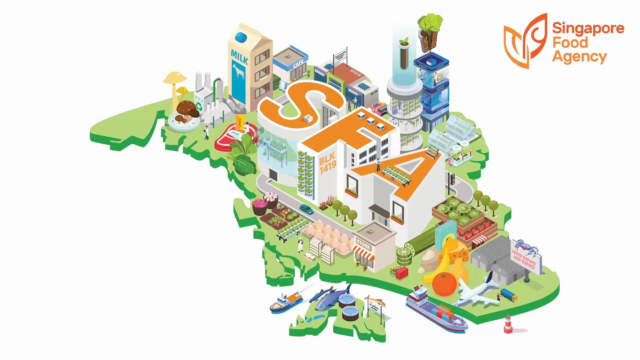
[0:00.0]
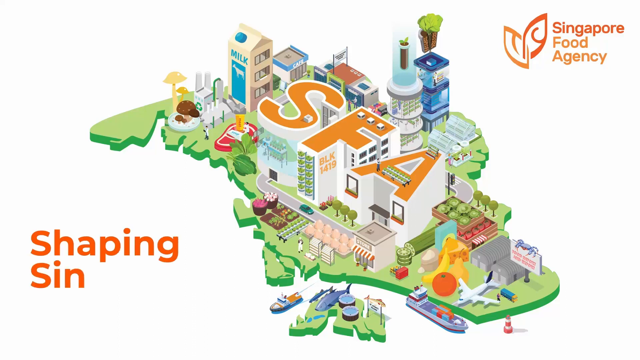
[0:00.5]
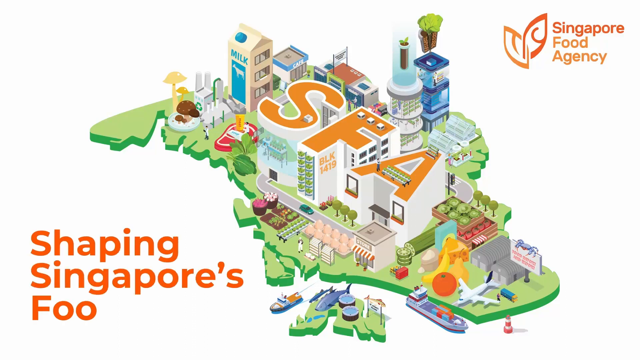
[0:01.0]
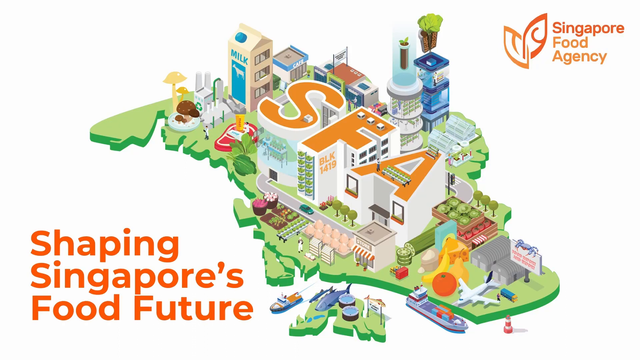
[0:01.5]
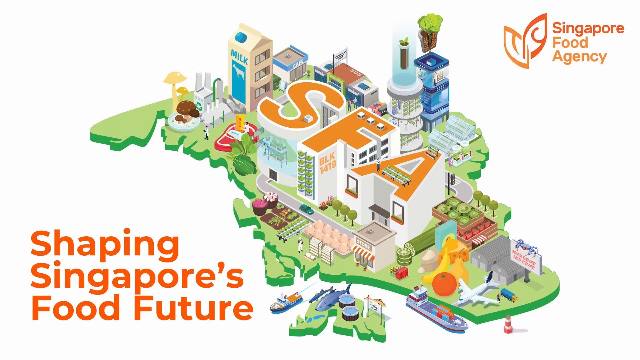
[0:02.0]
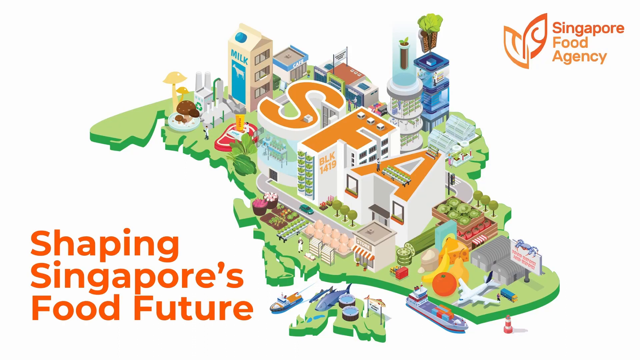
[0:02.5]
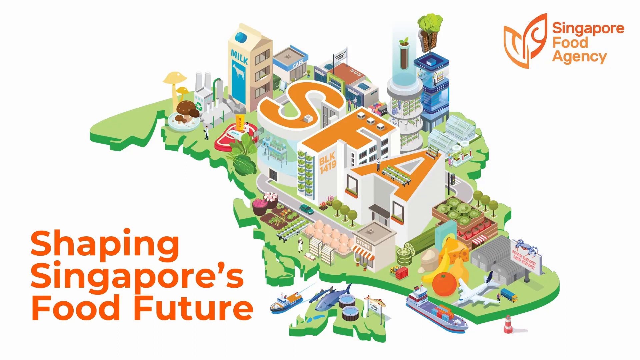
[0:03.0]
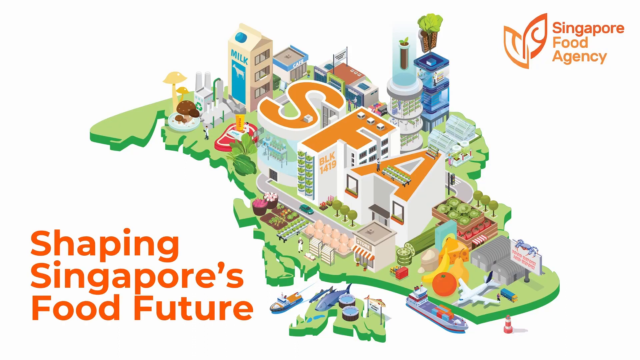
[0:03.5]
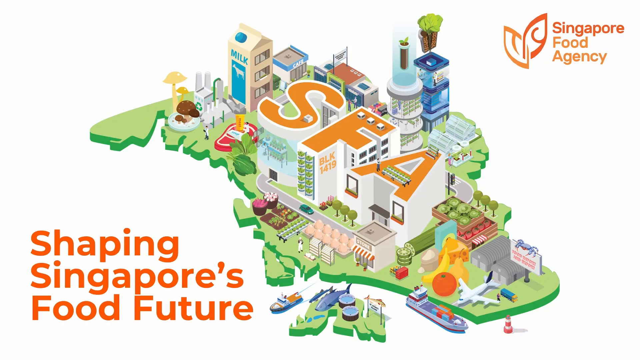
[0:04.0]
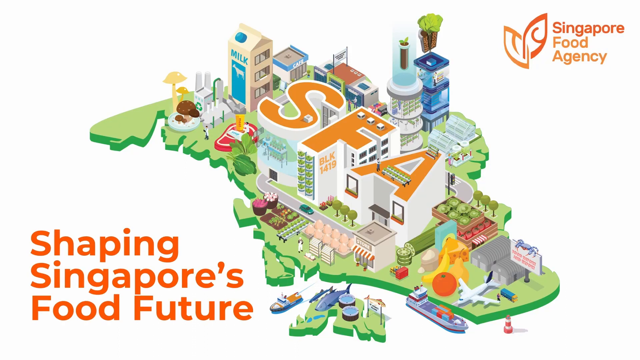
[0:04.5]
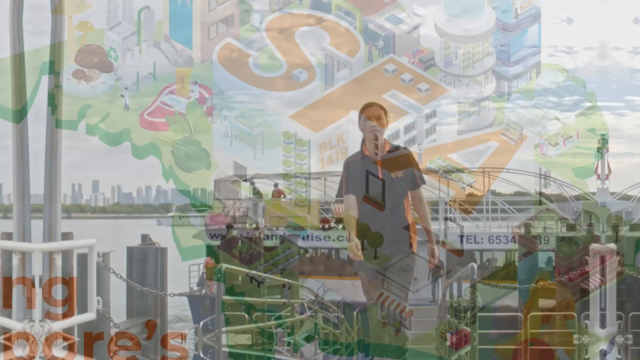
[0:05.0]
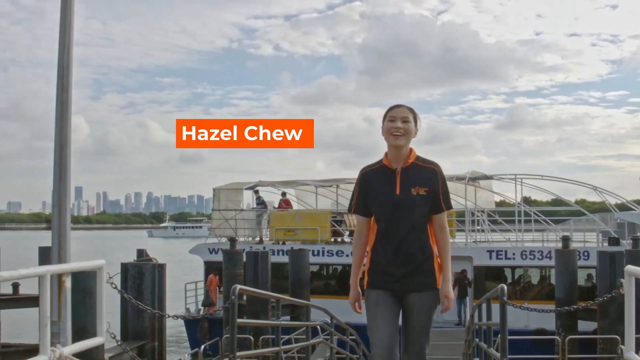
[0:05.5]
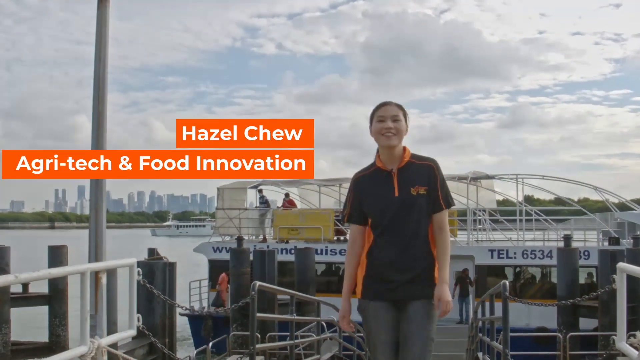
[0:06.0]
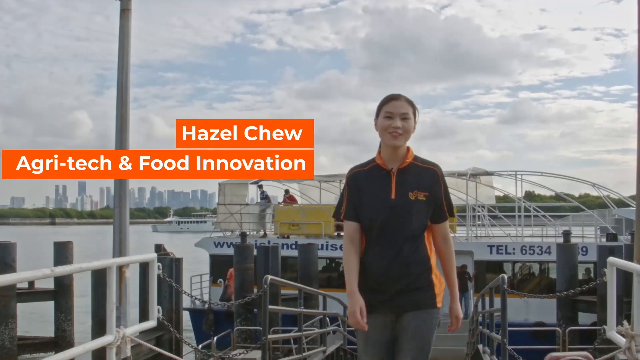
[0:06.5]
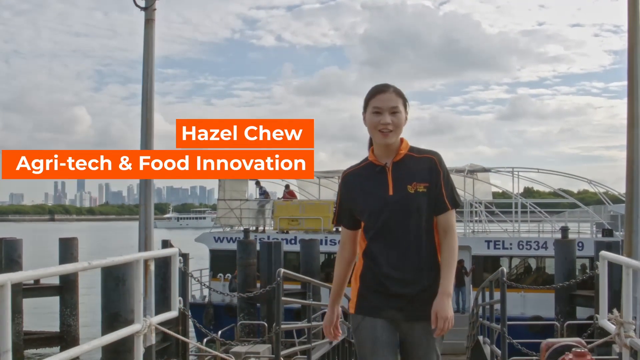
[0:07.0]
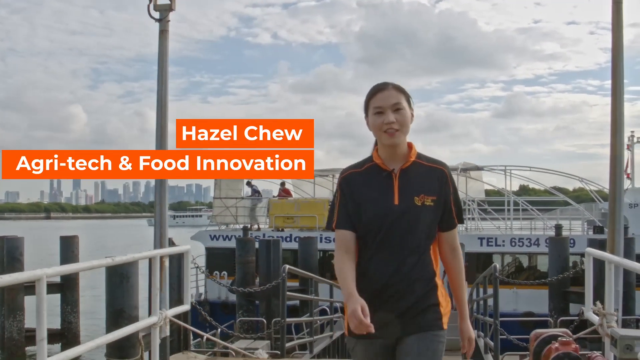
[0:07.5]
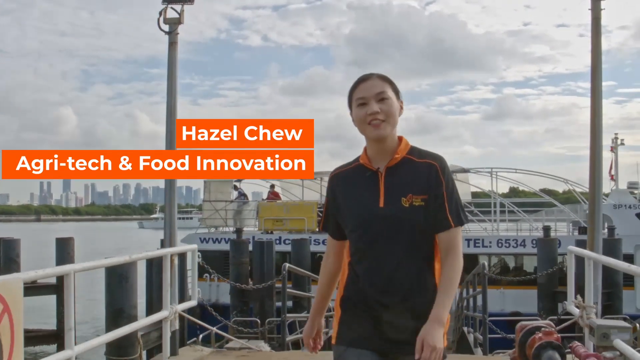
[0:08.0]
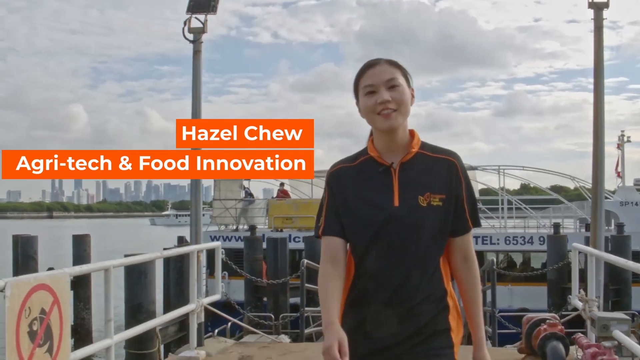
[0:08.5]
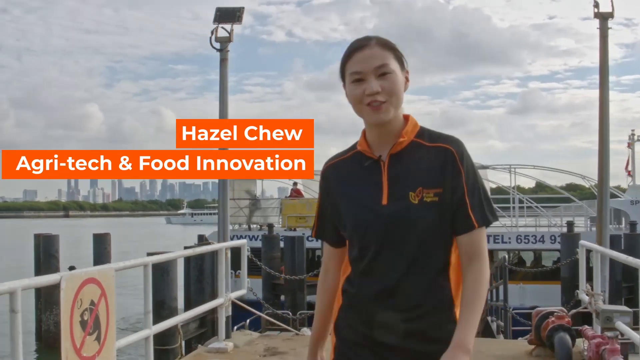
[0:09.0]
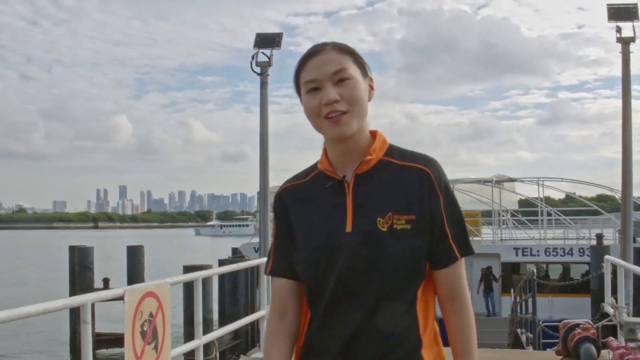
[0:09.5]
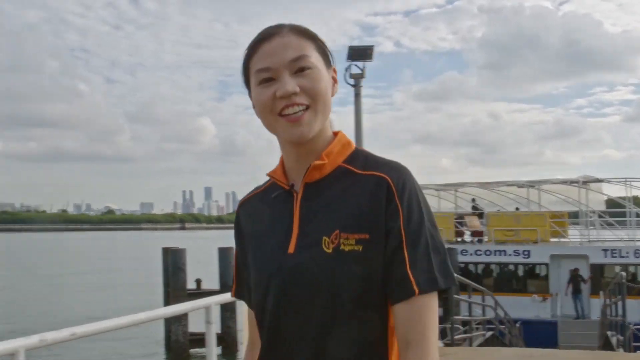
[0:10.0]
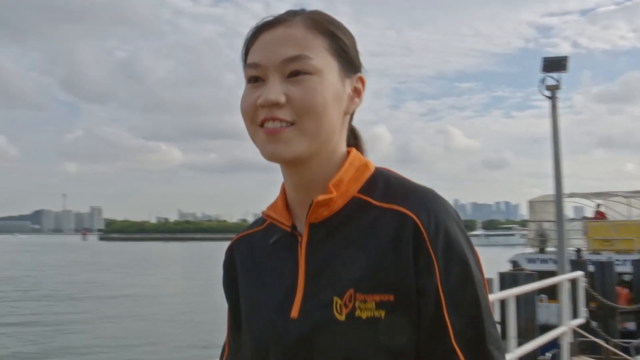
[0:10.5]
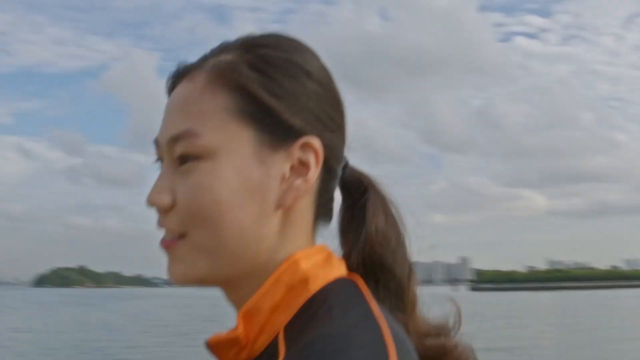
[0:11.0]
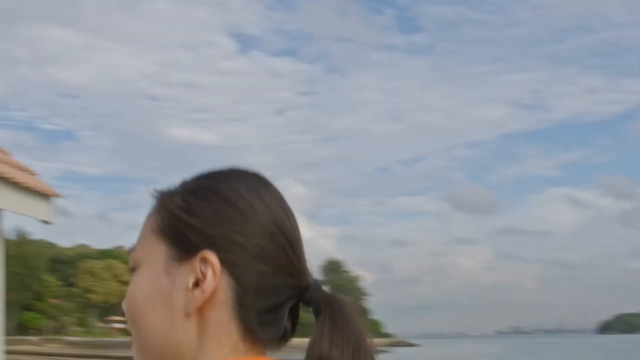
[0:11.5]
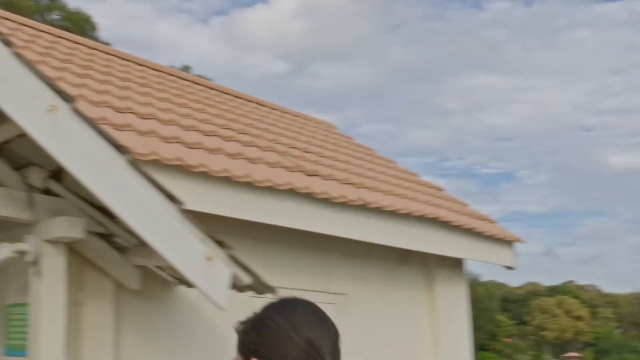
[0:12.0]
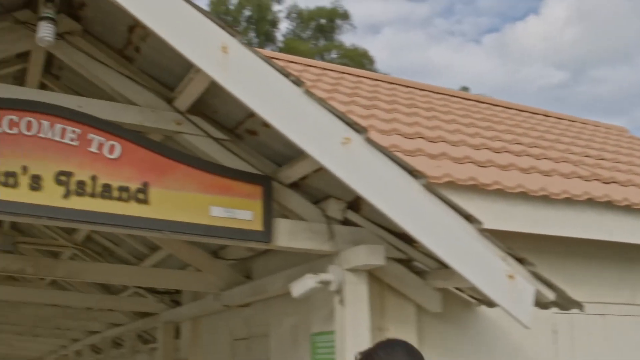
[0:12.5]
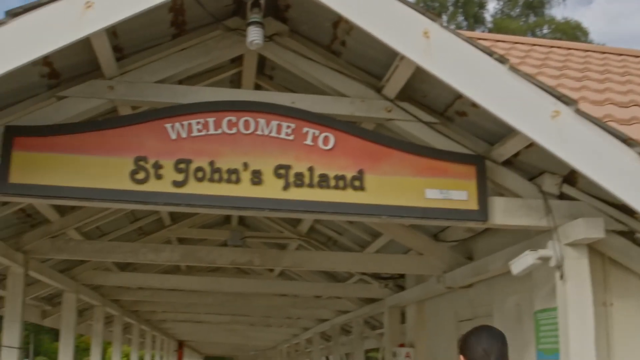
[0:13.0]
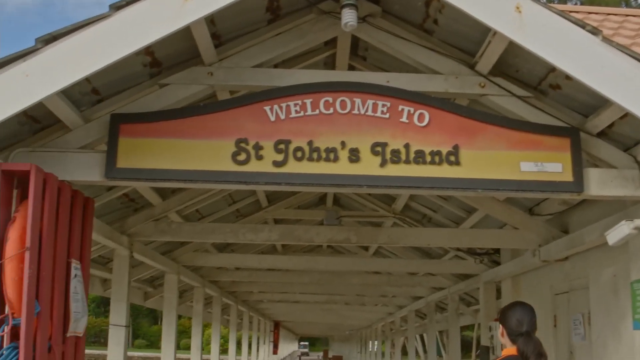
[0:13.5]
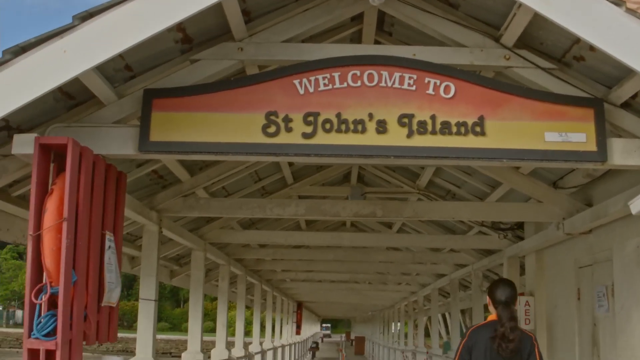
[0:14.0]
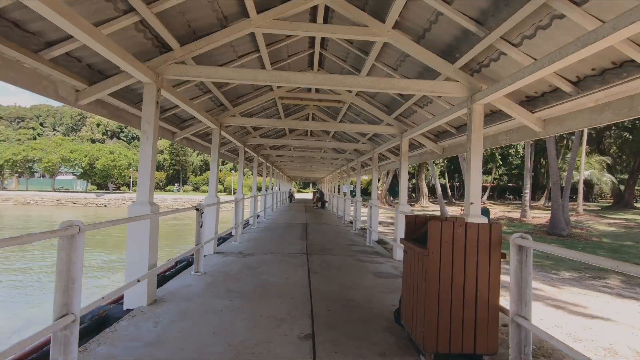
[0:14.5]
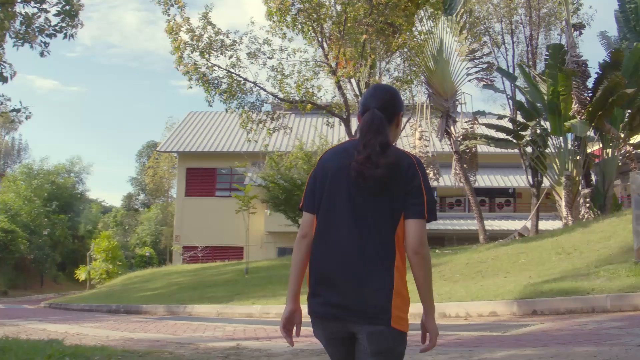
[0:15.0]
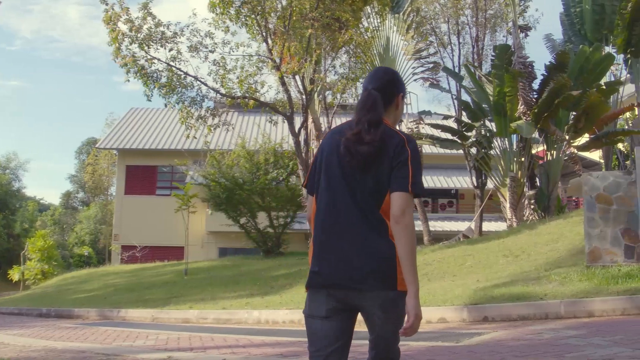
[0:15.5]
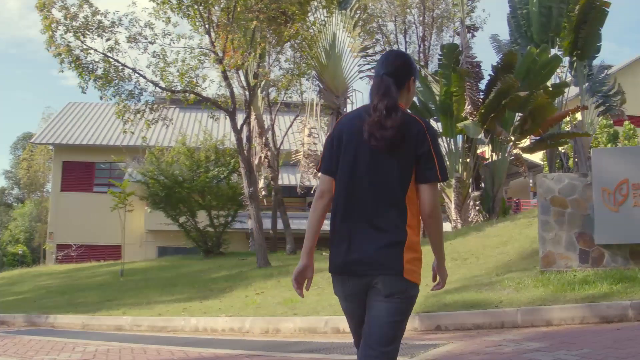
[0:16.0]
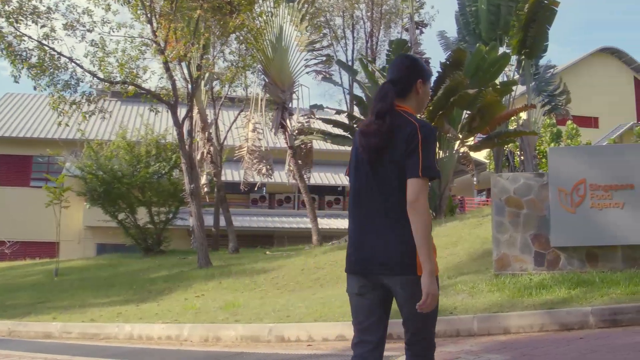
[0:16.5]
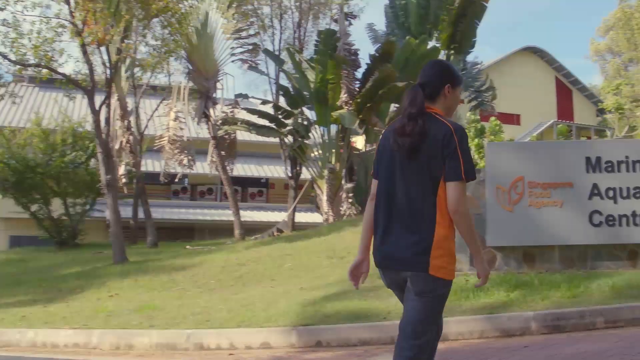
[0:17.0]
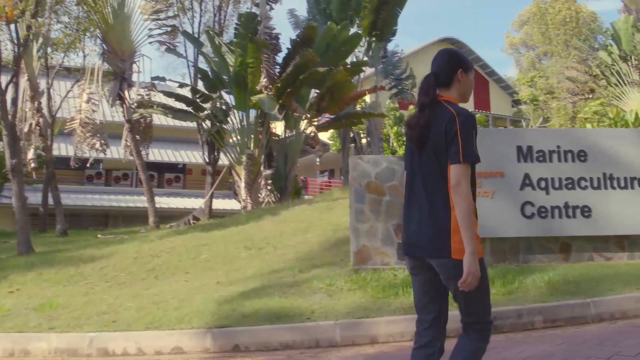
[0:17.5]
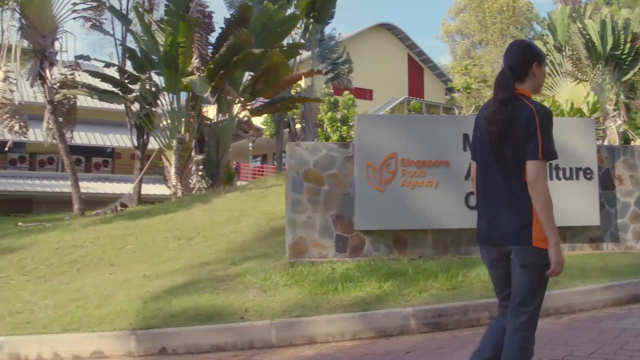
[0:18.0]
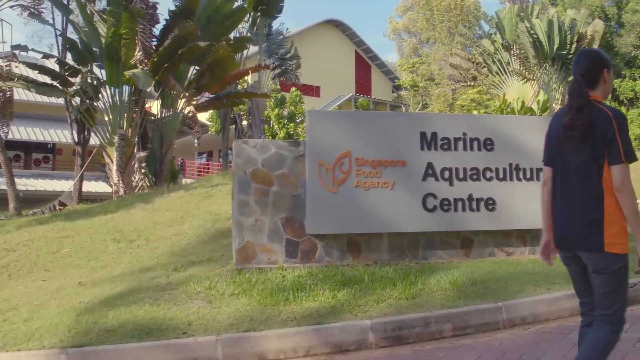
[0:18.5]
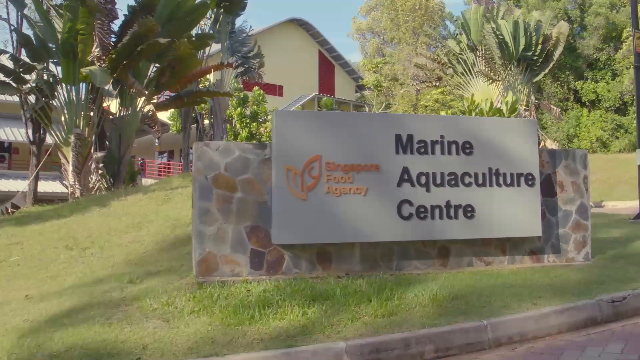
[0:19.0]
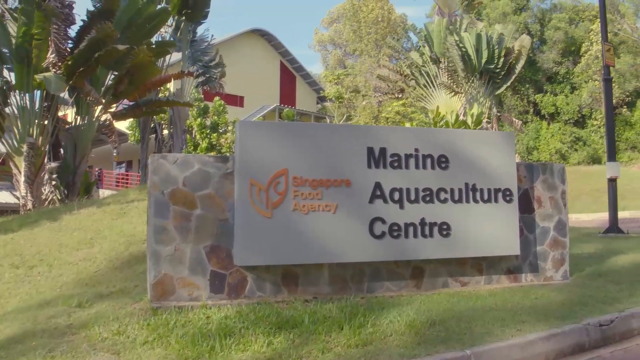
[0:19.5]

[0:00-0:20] The video opens on a picture of the Singapore Food Agency building and the area directly surrounding it. The letters SFA are on the top of the building, and the building appears to be shaped in the letters SFA. The words "Shaping Singapore's future" pop onto the screen. The main character then appears: apparently a woman, who looks young. She seems to be walking outside on an overcast, cloudy day. She has black hair, parted on the side and pulled down into a low ponytail at the nape of her neck. Behind her are some buildings in the background, along with a bridge with two people walking over it, a large body of water, and lots of tall buildings. The words "Hazel Chew" and "Agritech and food innovation" appear. Smiling, she walks into the building, crossing a breezeway and then walking past the Marine Aquaculture Center.